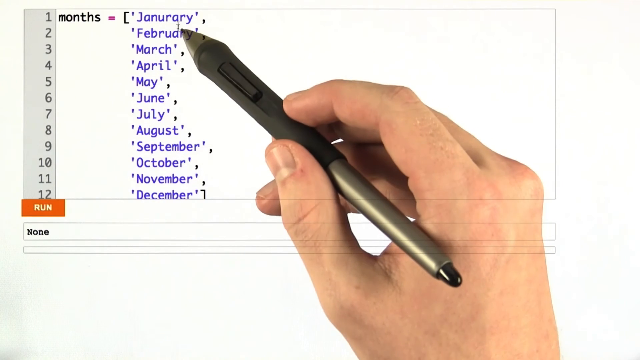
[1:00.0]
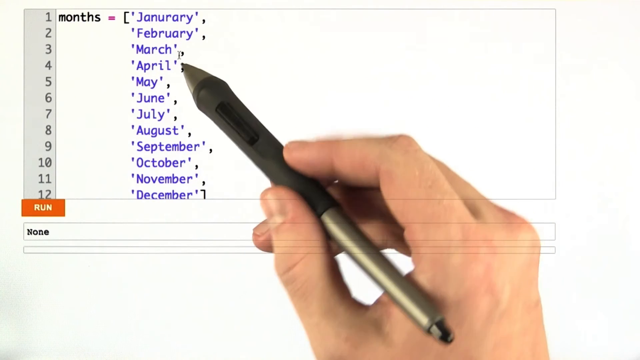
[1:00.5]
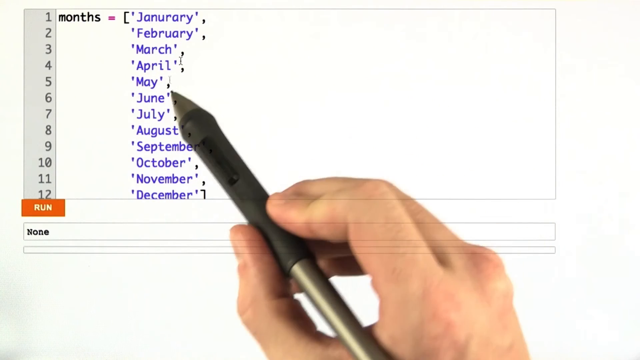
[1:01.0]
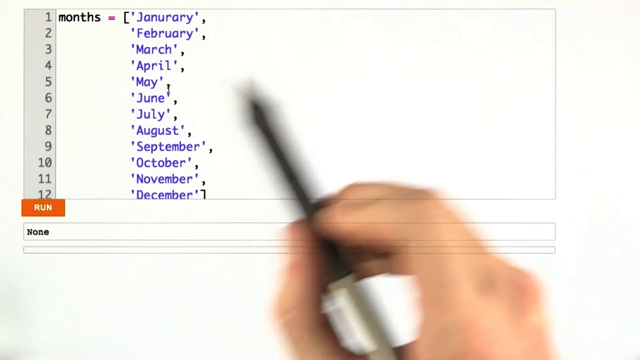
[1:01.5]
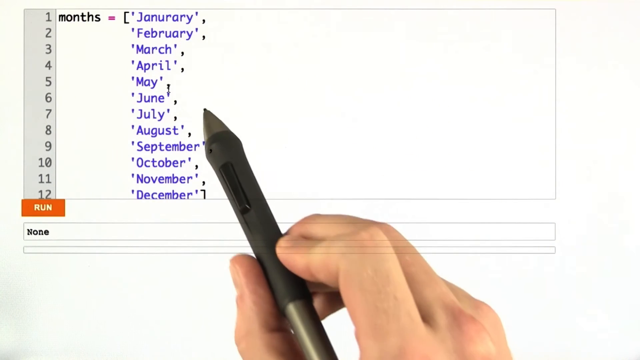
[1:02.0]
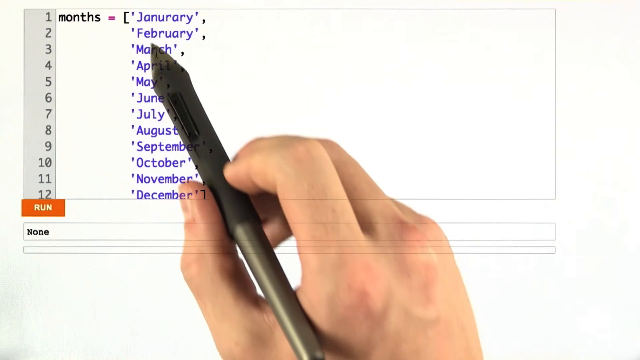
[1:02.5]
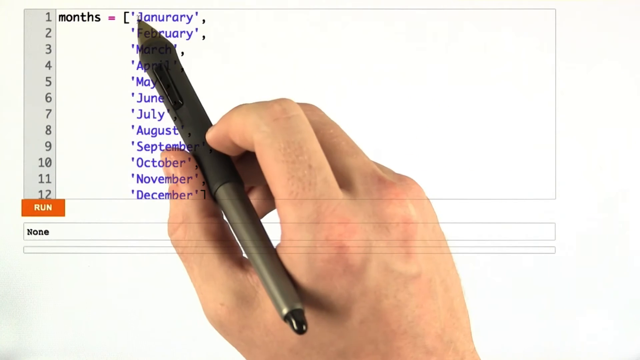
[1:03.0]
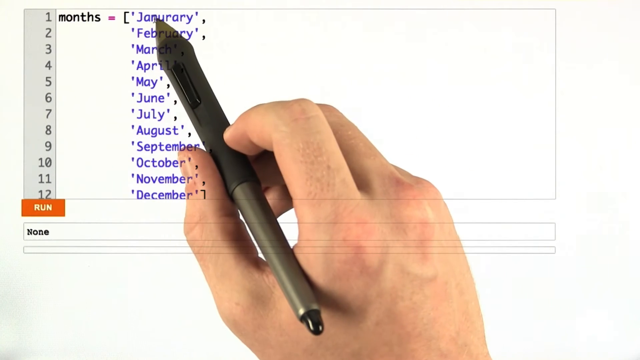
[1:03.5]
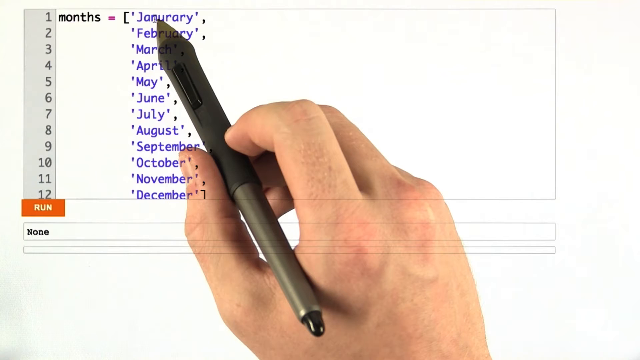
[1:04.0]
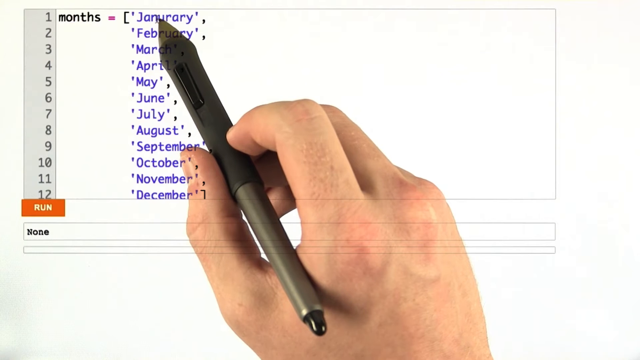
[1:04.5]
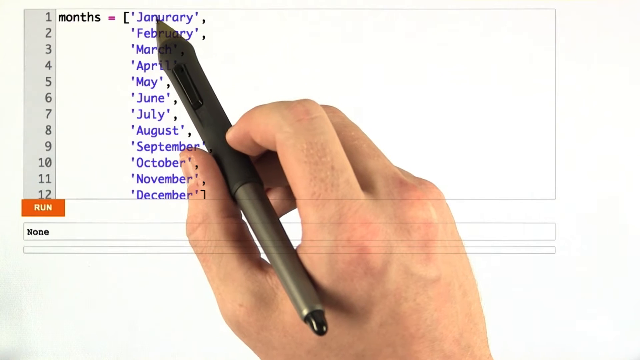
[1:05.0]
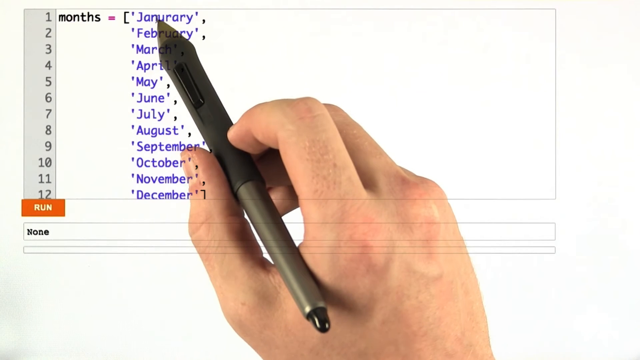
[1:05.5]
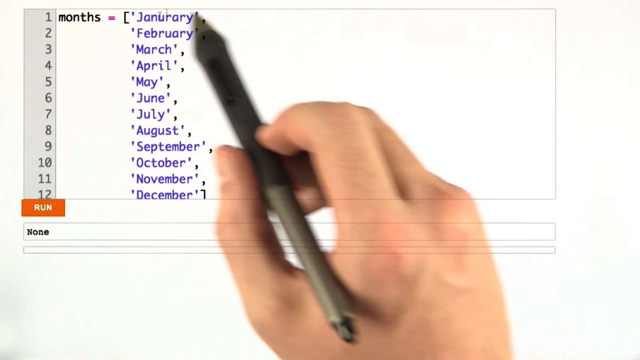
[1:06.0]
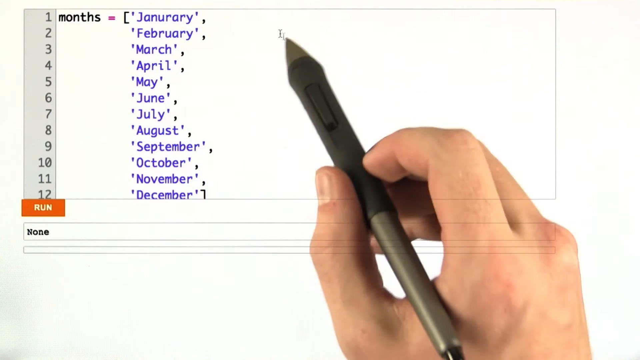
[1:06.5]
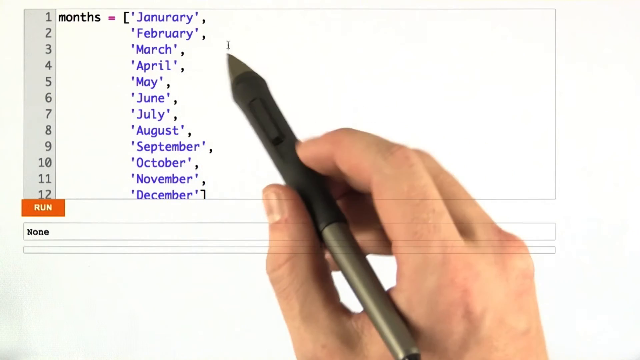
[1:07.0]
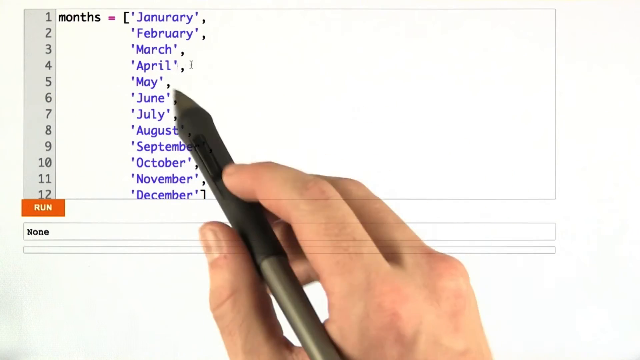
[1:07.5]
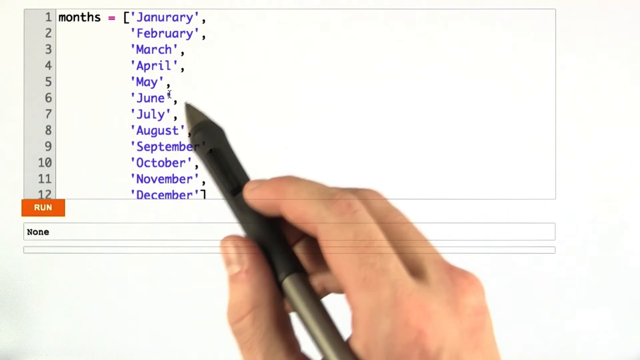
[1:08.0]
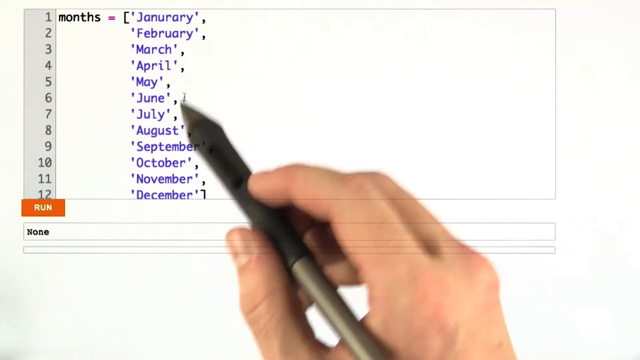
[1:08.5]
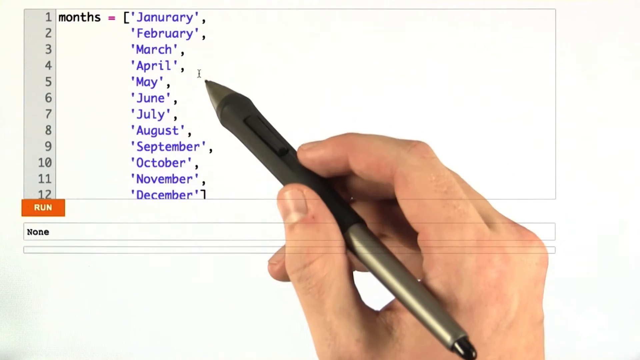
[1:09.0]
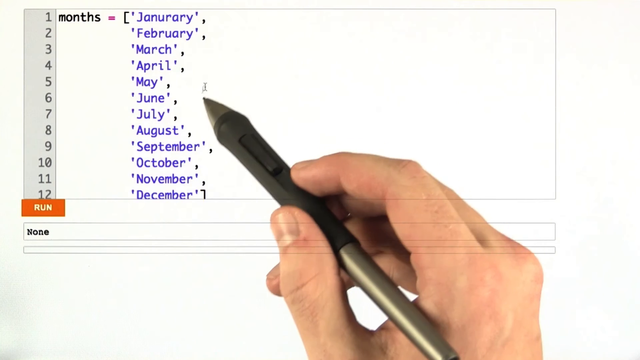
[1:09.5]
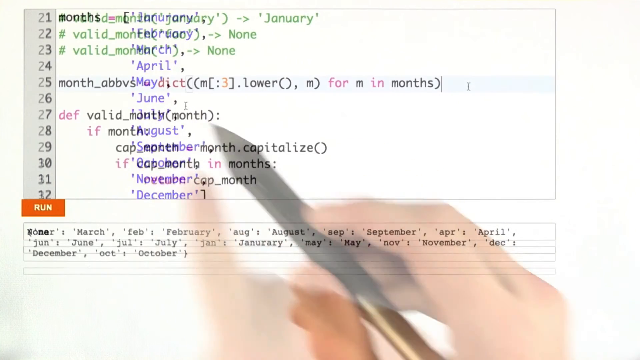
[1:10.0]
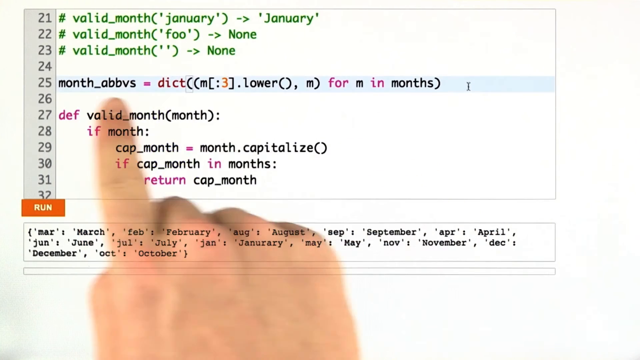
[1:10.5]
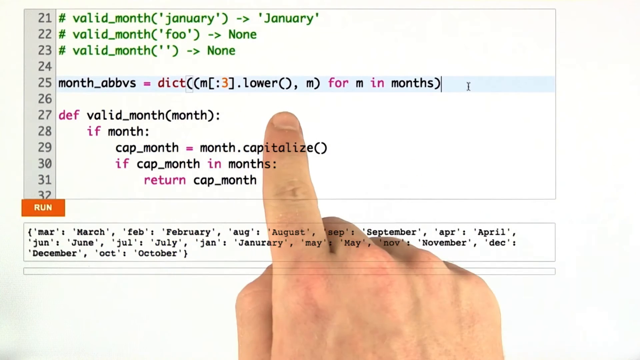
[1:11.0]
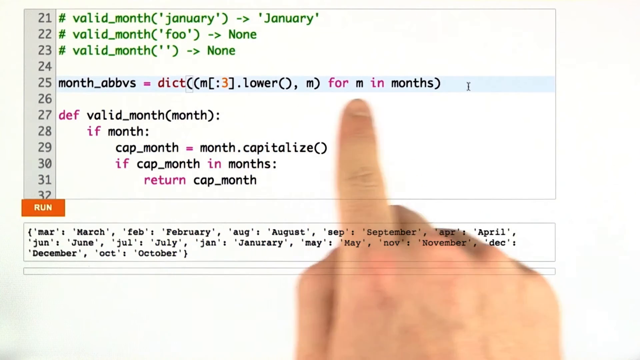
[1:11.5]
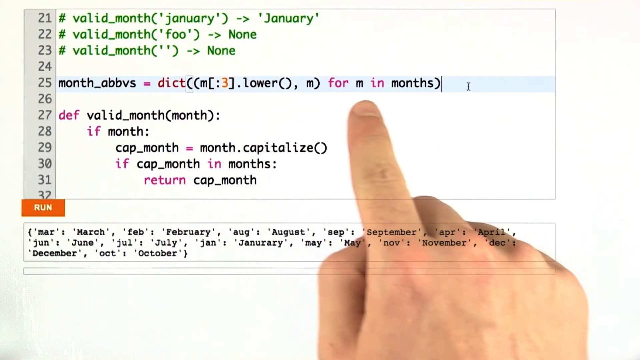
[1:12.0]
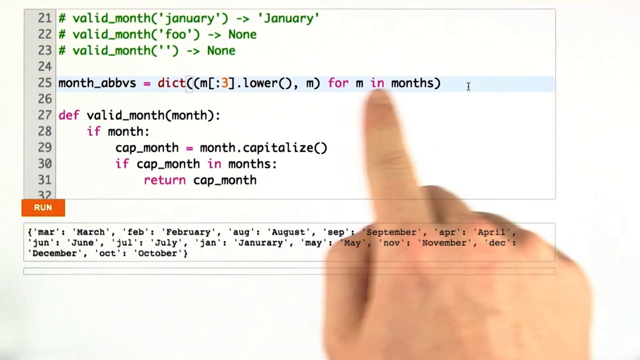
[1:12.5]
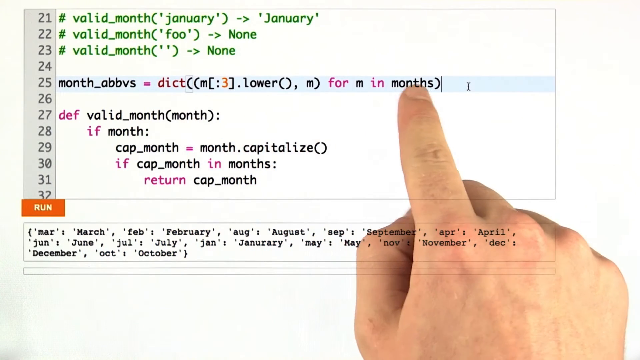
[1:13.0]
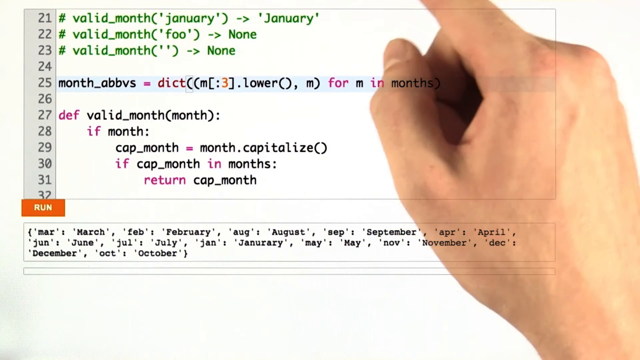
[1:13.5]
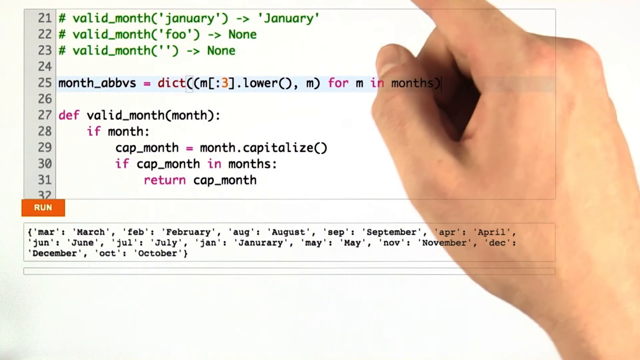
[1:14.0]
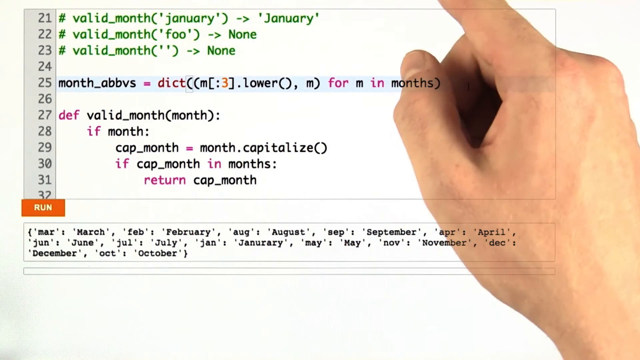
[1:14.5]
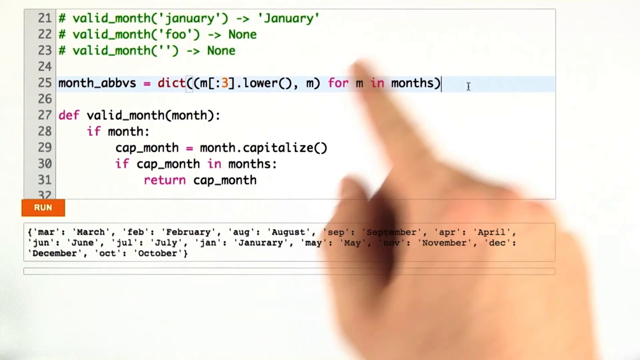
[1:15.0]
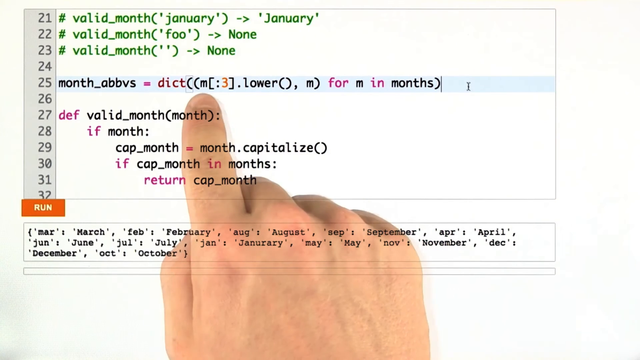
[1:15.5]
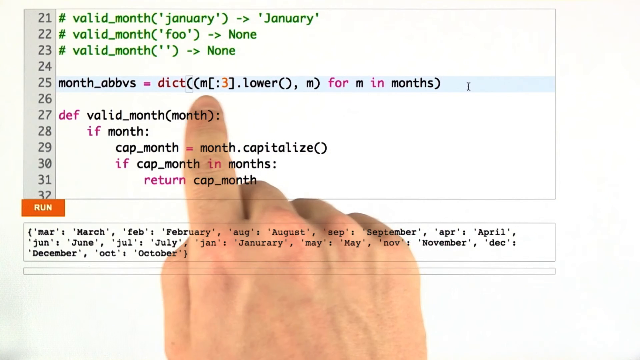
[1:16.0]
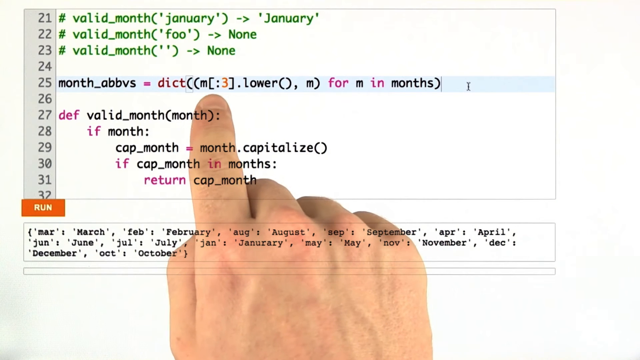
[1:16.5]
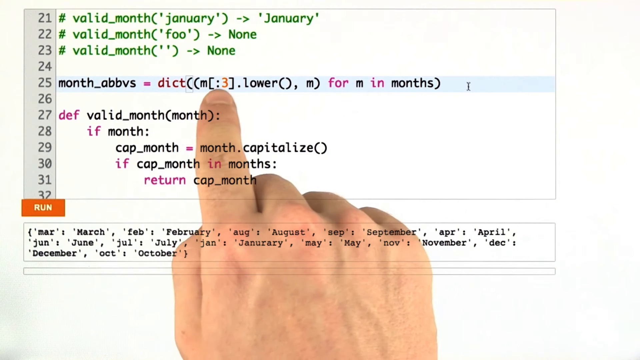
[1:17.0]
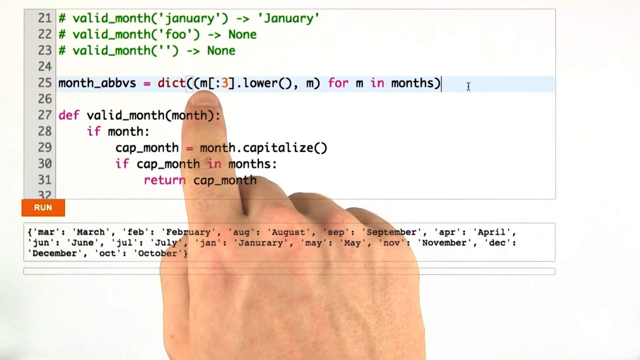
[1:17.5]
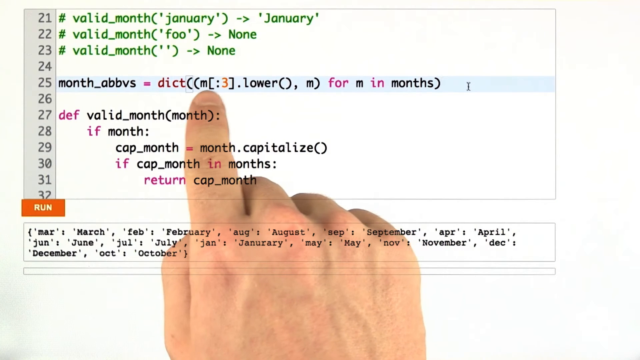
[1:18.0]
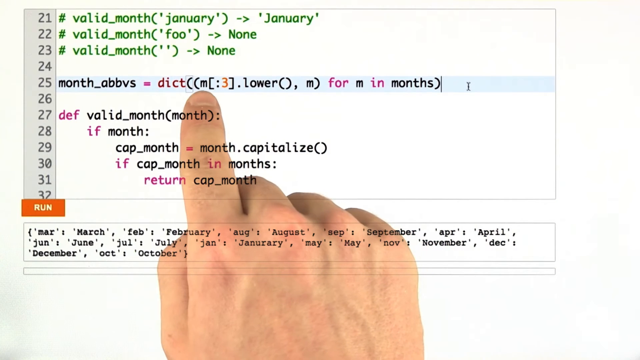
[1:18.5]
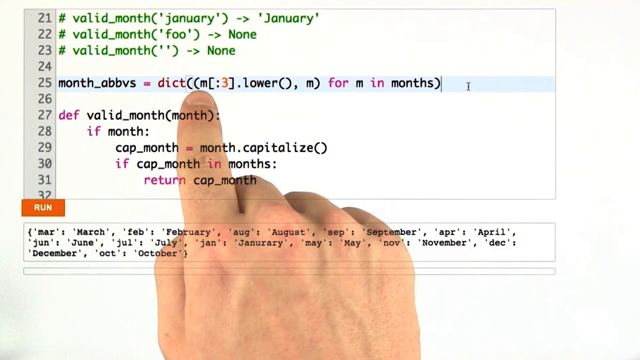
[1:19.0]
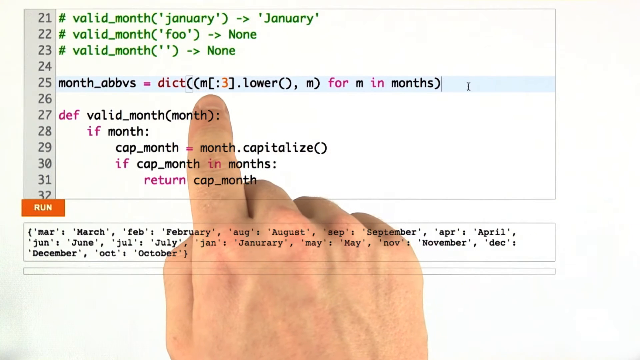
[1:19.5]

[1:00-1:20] A human hand holds a black digital pen, pointing at the screen and hovering over several of the words. Line 21 is in green and says "valid month January." Line 22, also in green, says "valid month foo none." Line 23 is "valid month" with just quotation marks and "none." Further down, line 25 says "def valid month" in pink, followed by a line involving "month capitalize" and "cap month." The program appears to be about when to capitalize the months of the year. The months are listed in purple, beginning with January, February and March and continuing through December. The hand then puts down the digital pen and points to areas of the screen.